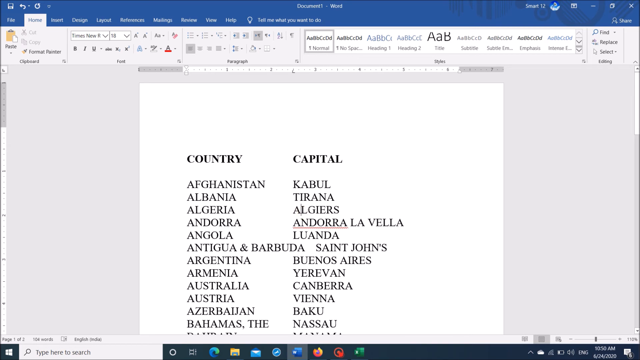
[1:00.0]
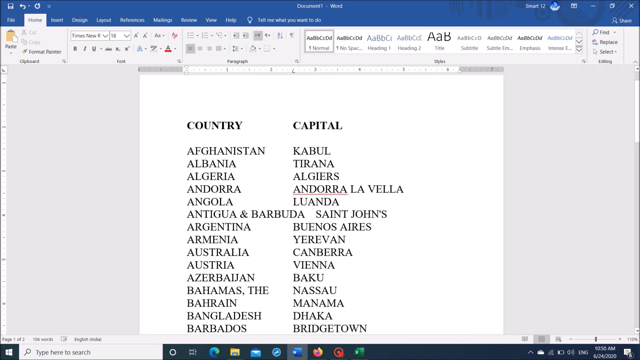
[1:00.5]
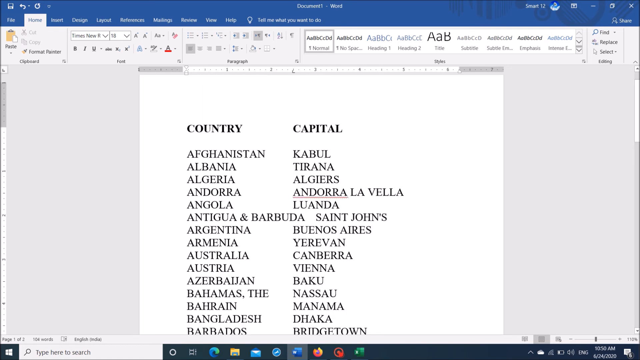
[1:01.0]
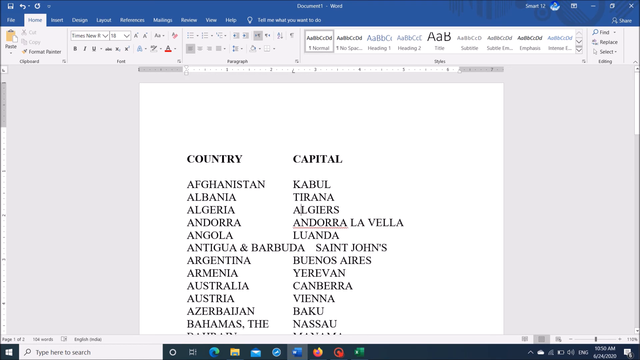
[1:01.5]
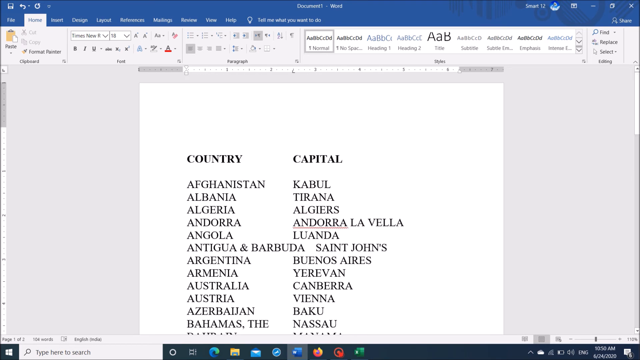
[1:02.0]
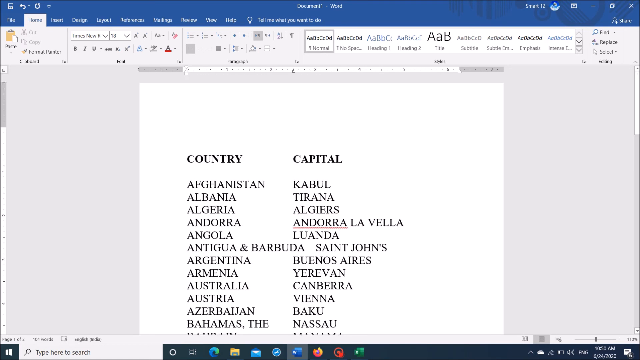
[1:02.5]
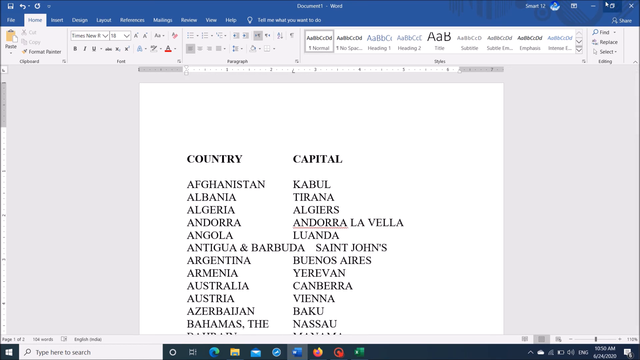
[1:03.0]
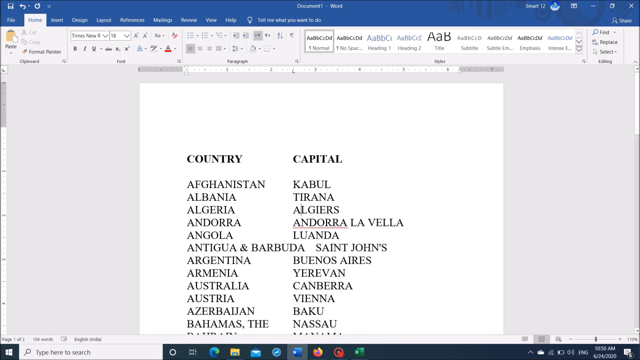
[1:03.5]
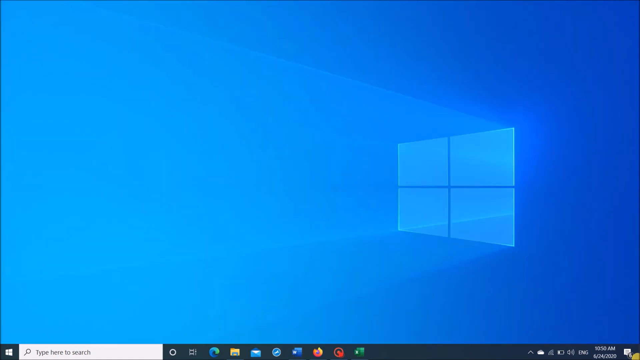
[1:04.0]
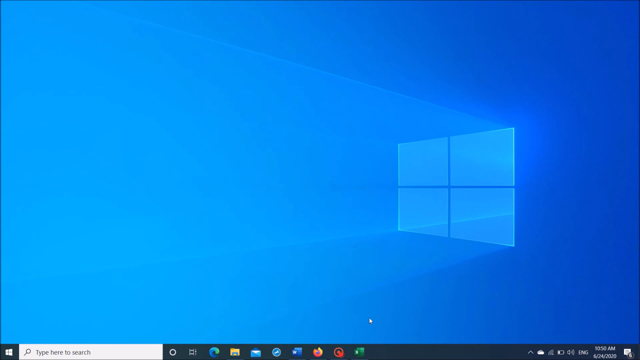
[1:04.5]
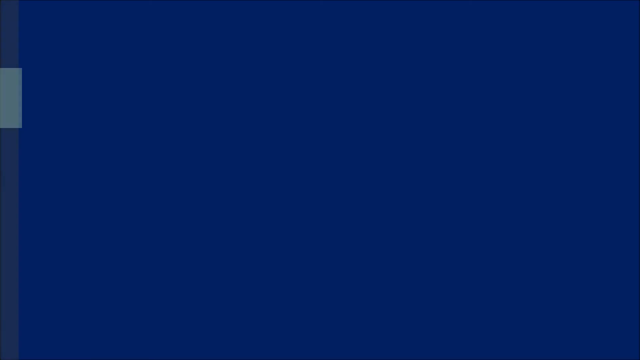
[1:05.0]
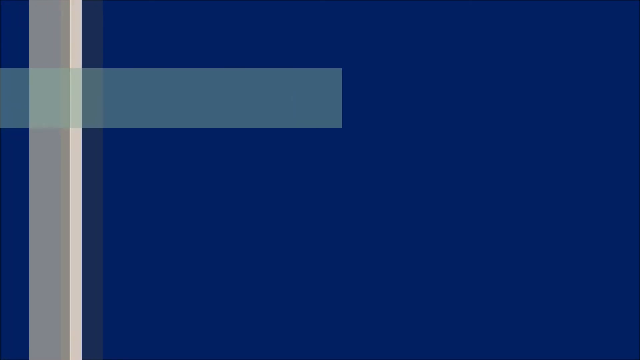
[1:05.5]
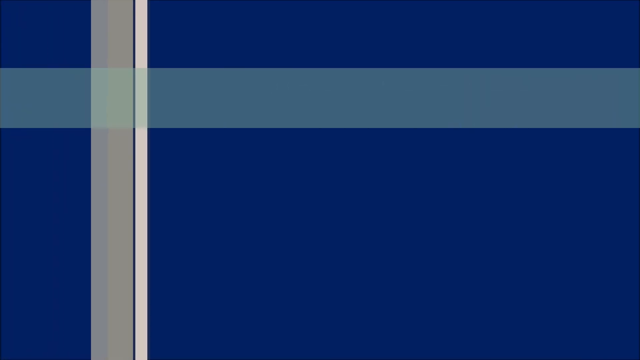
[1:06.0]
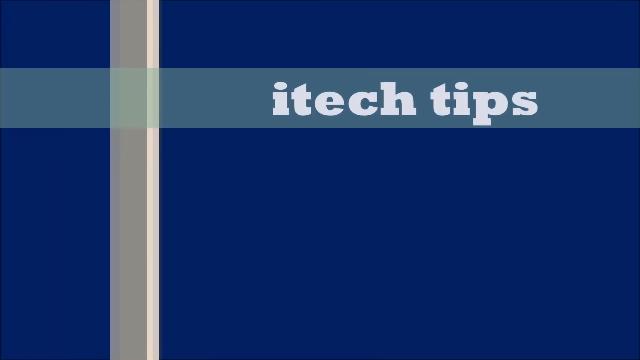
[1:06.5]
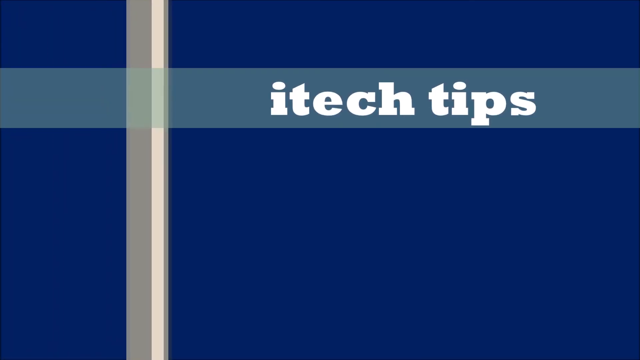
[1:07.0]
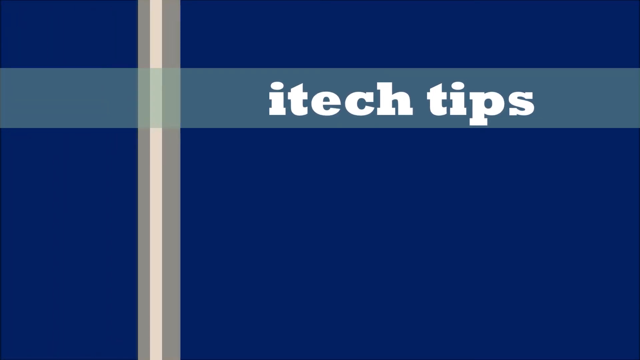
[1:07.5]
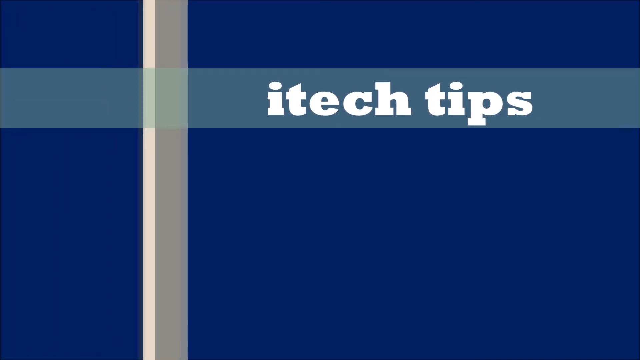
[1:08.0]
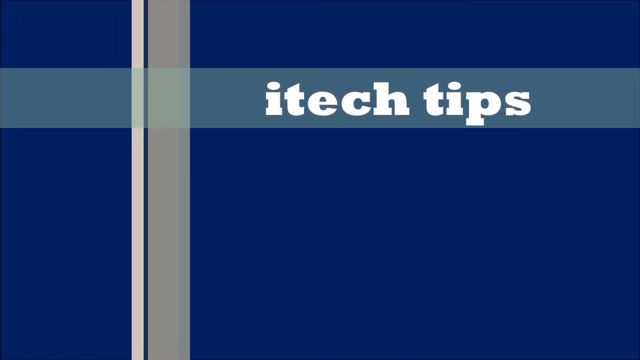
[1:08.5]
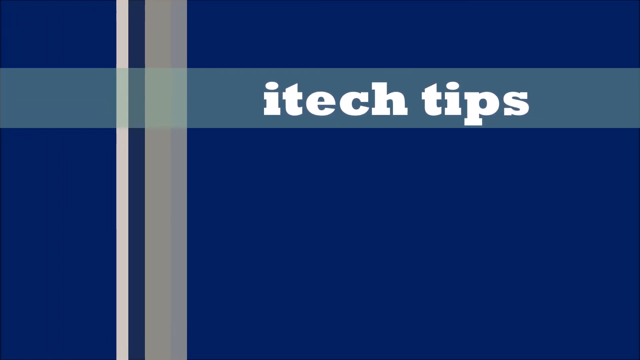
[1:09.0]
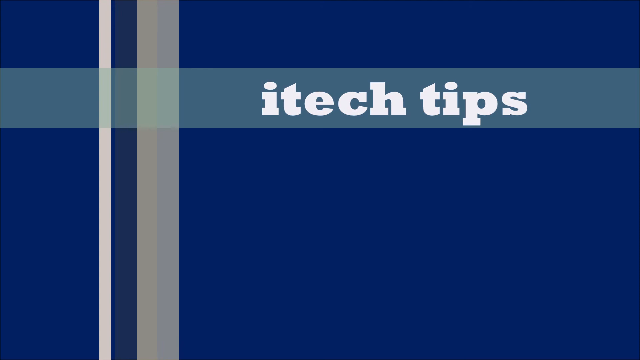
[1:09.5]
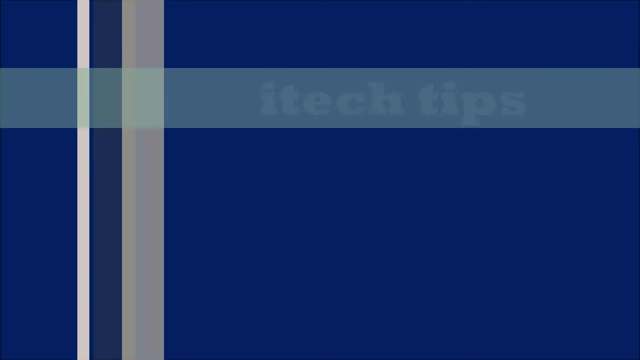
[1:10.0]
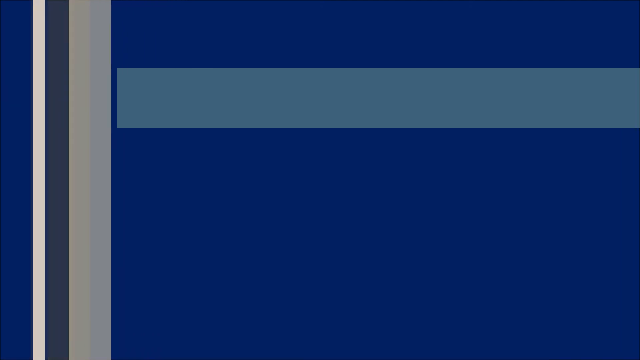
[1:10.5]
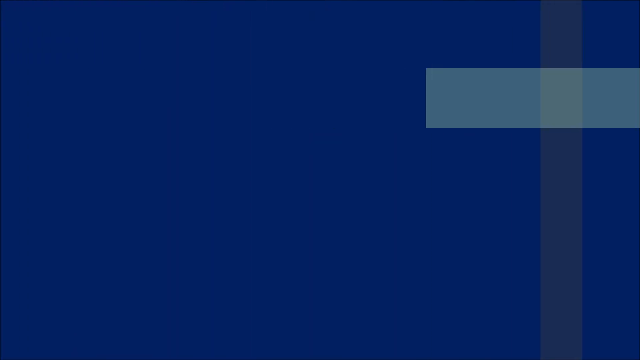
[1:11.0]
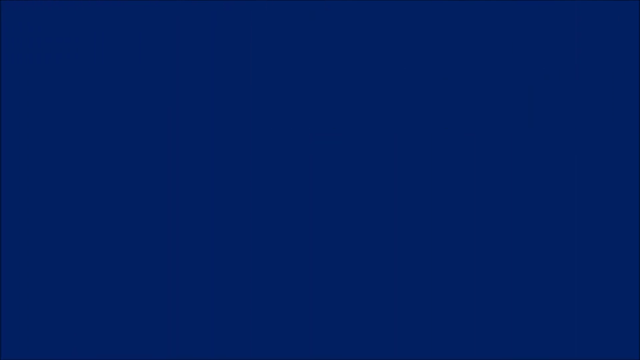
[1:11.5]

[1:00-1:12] The Microsoft Word page is still shown, with the content now in list form instead of columns. The words country and capital are bold, and there is a space between each heading and its list of countries or capitals. The person scrolls down to show the whole list and then scrolls back up. They close the page and the home screen appears. Then an icon with the words "iTechTips" is shown.